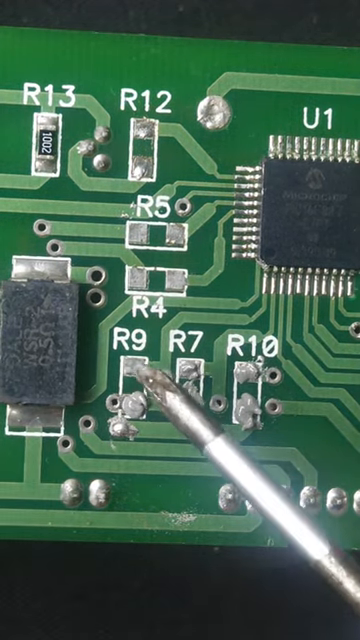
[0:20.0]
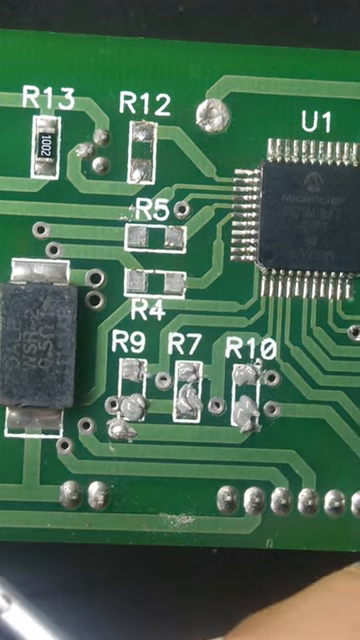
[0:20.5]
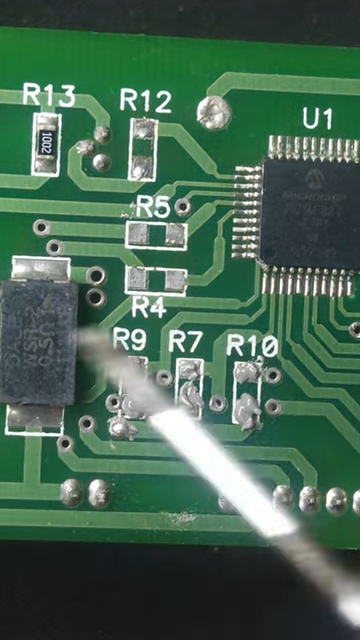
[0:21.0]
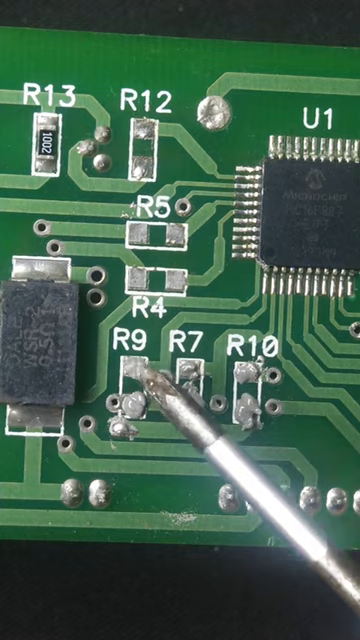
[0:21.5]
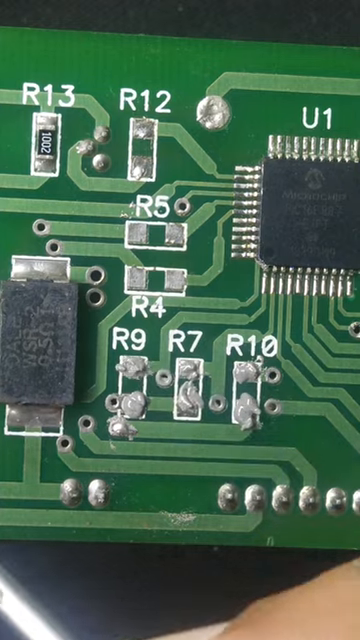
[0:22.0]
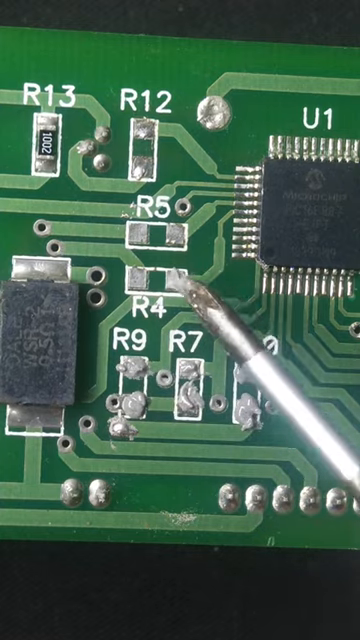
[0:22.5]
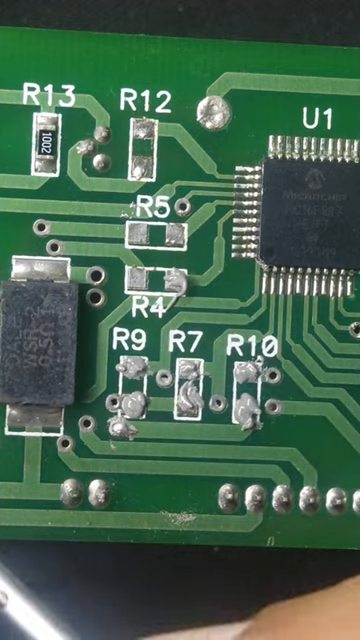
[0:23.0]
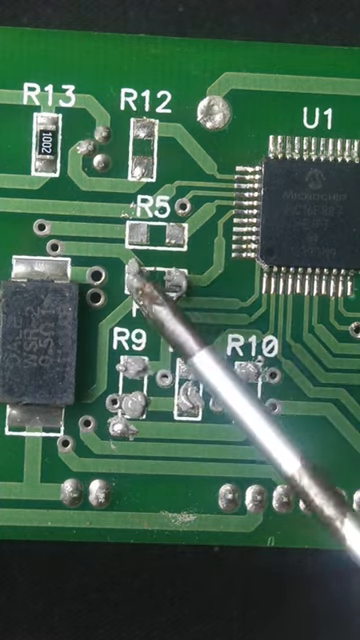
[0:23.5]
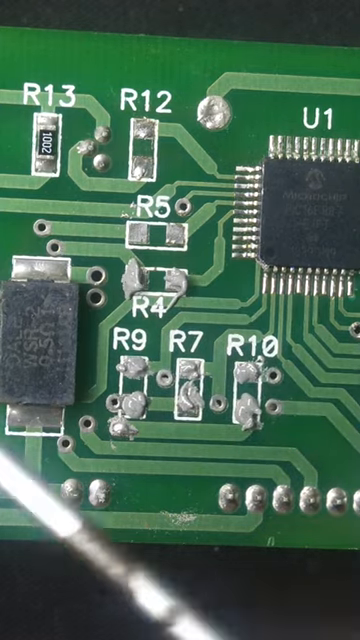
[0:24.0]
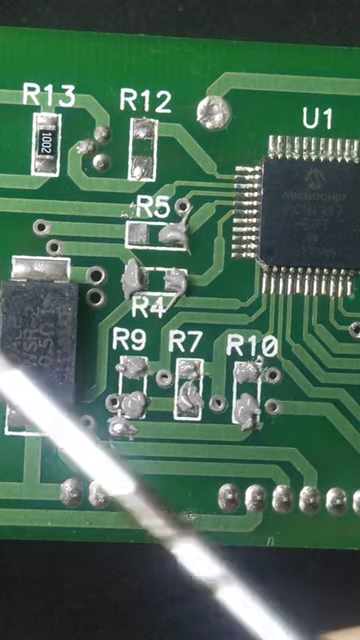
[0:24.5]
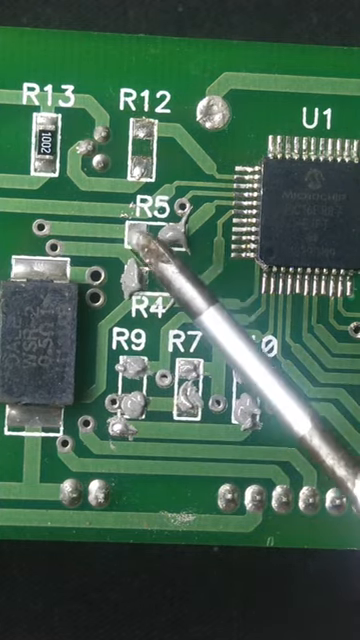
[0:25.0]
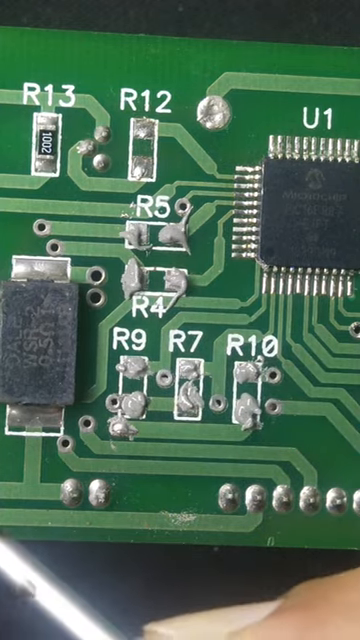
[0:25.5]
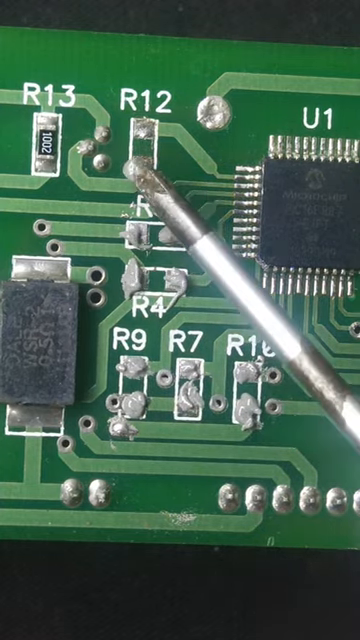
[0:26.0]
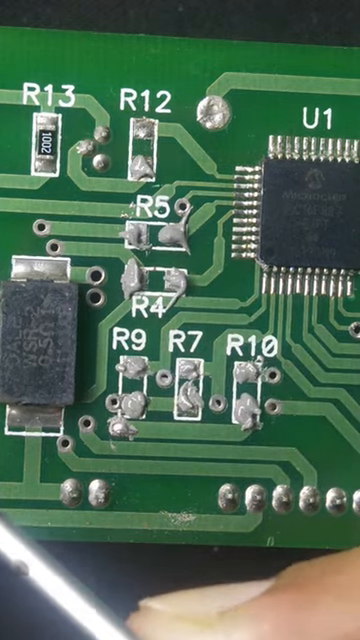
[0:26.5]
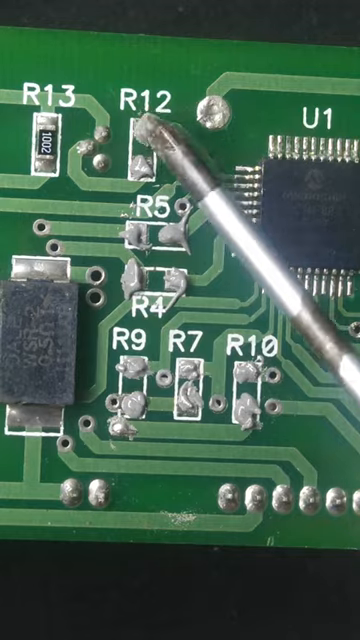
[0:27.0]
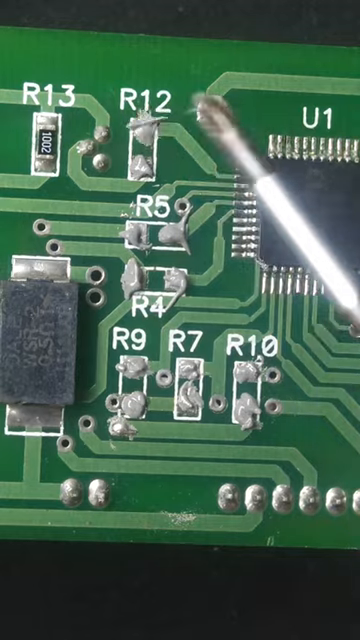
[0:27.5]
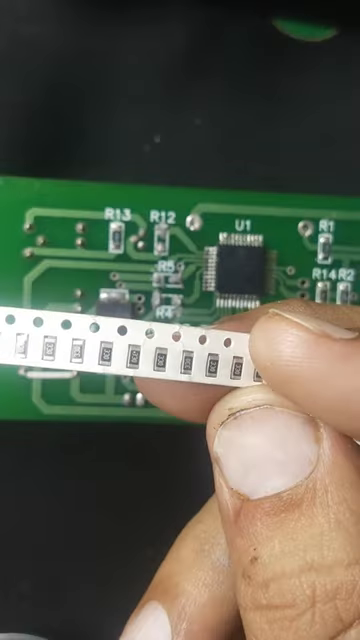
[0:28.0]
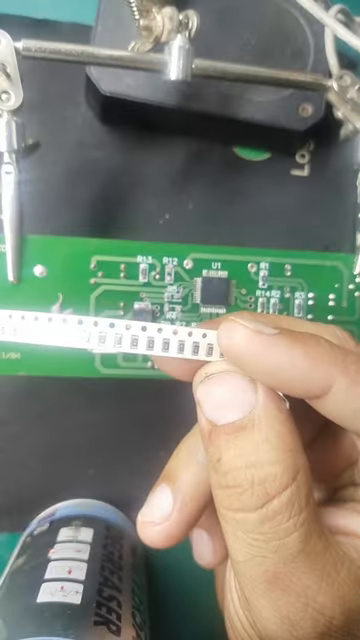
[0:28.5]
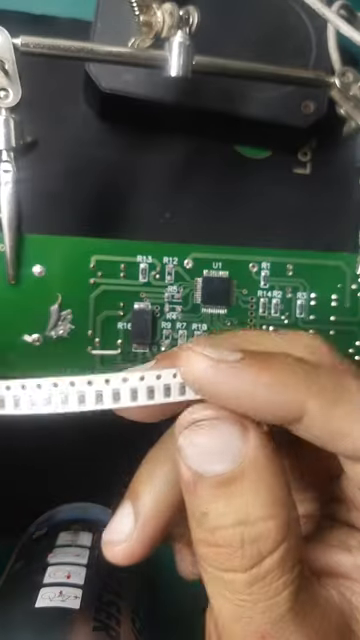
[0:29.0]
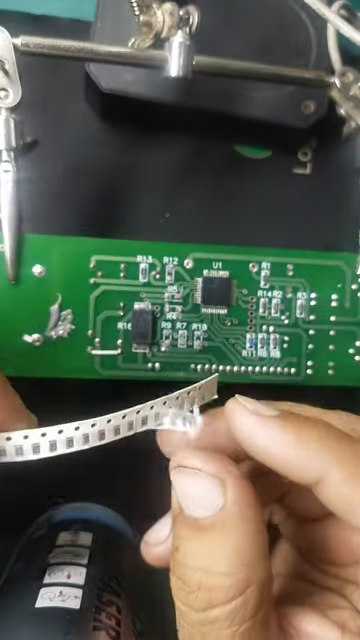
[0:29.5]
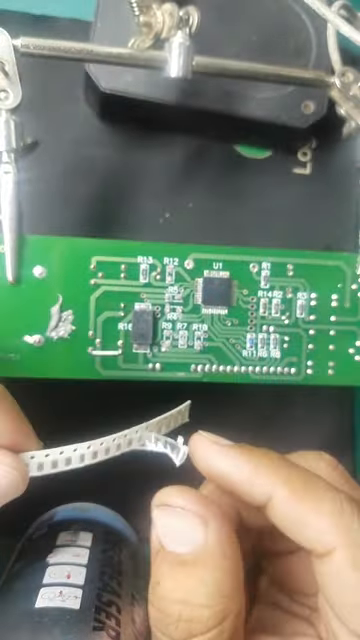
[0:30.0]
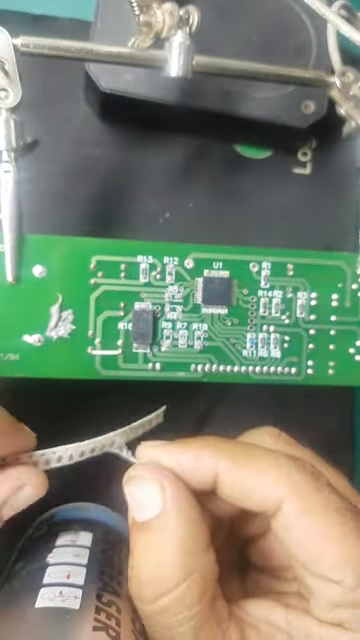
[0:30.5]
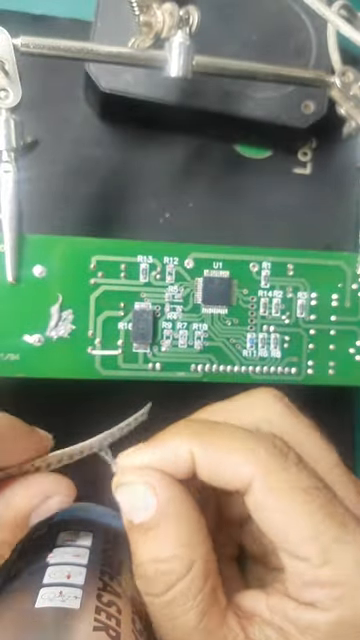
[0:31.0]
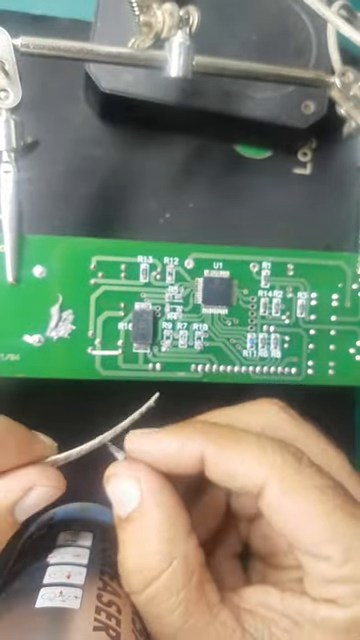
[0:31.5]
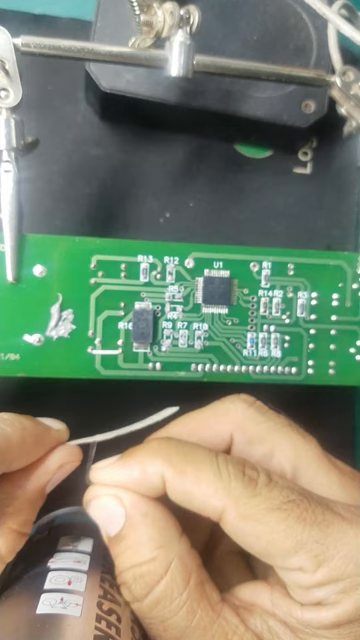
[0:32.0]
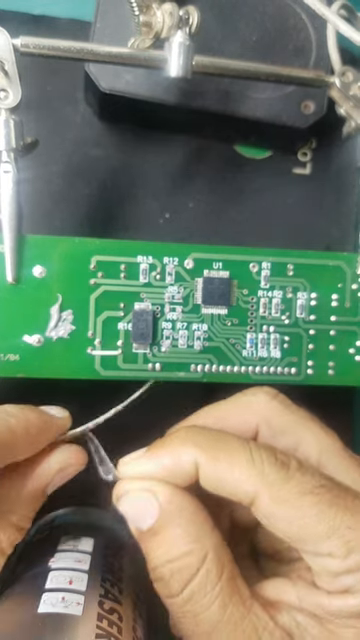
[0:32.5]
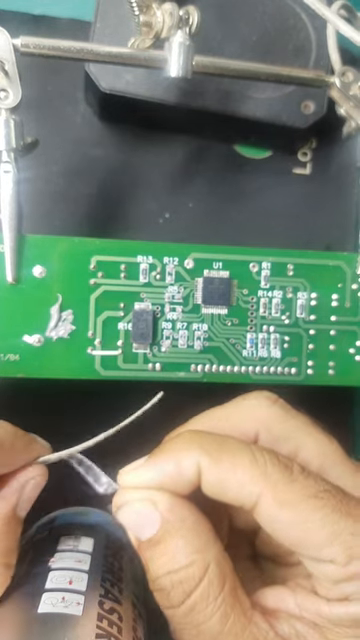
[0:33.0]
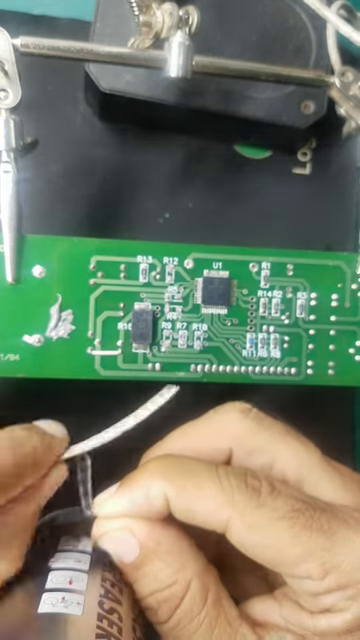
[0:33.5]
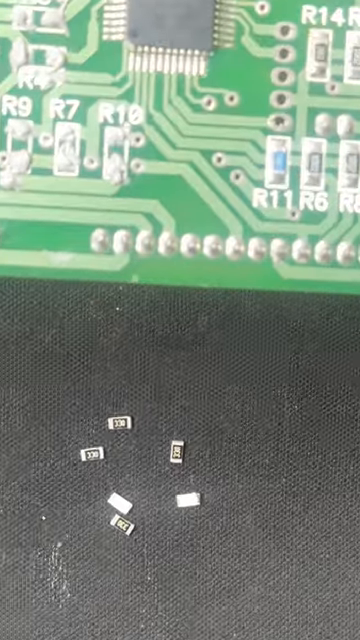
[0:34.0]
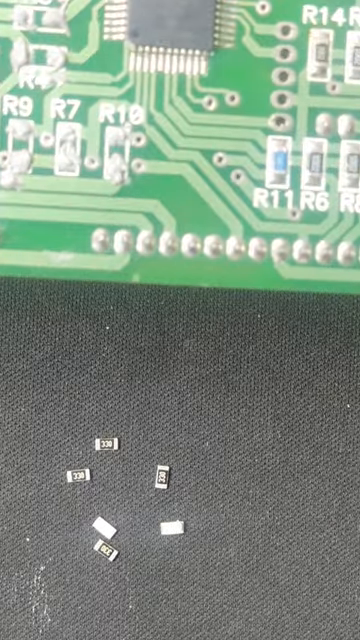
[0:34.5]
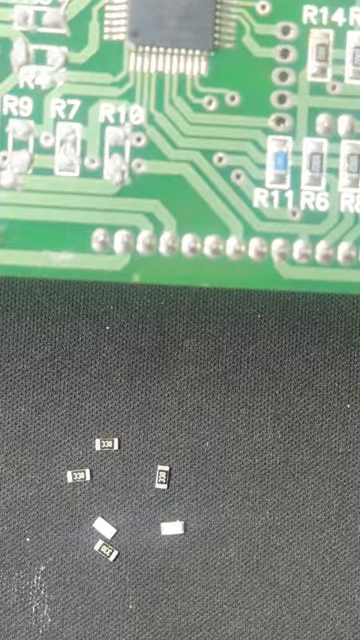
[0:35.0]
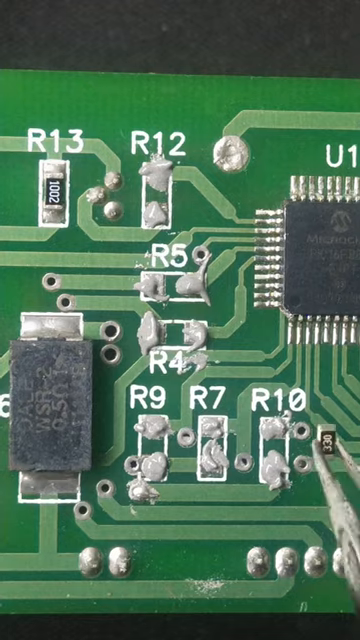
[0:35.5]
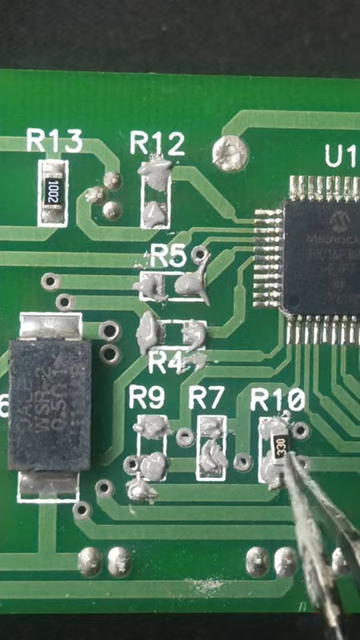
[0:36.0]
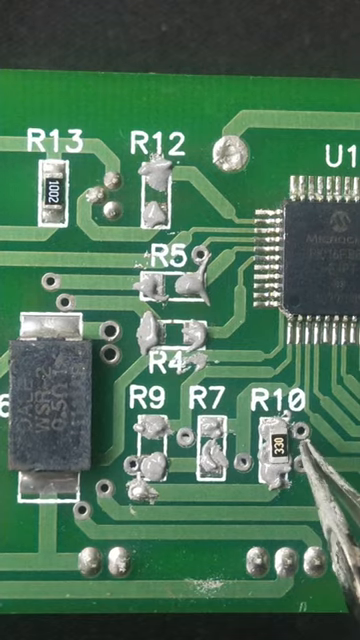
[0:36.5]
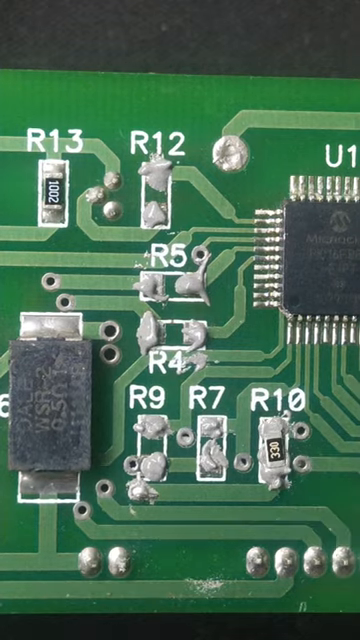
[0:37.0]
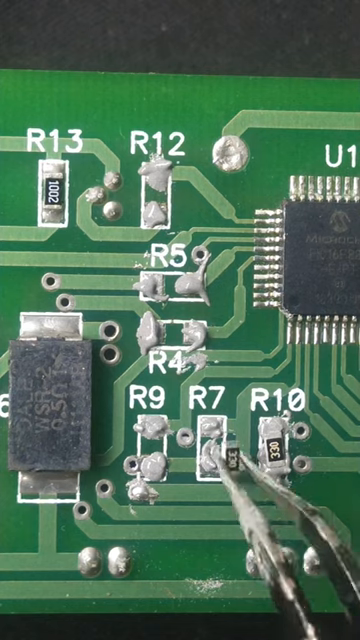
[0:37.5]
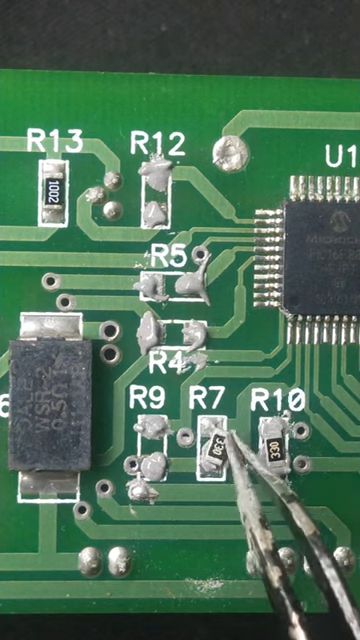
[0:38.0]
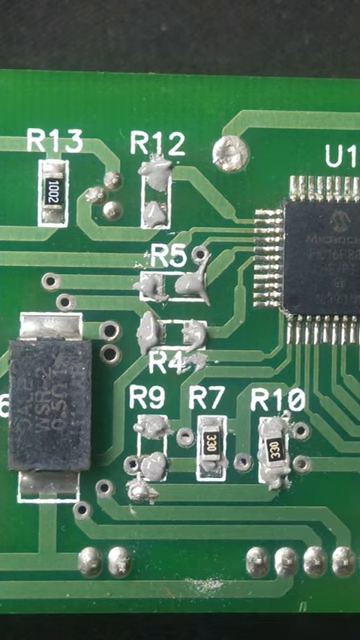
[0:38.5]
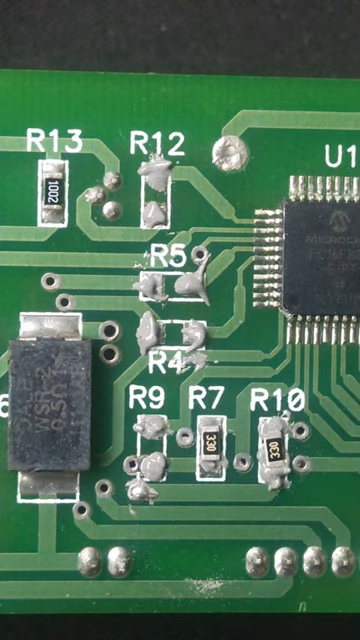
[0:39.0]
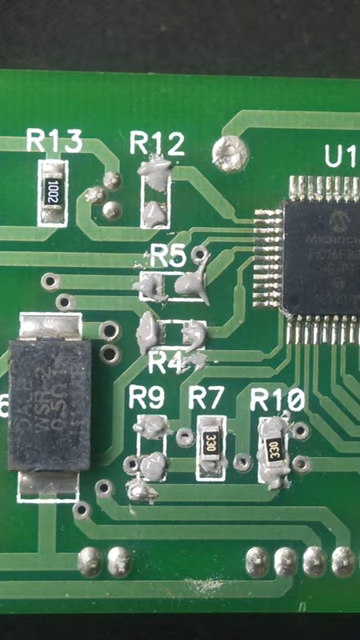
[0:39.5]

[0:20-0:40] The man uses the small tweezer-like tool to put something on the outputs, touching R9, R7, R10, R4 and R5. The video then cuts to another part where he has a strip and peels off its back, looking like he is peeling a sticker. The tape has little silver beads on it, and he is possibly going to use it to attach them to the outputs on the panel.